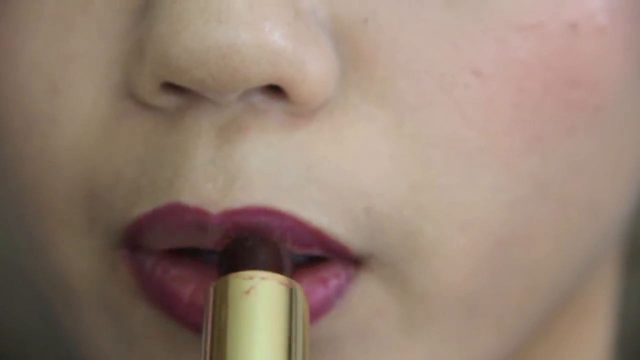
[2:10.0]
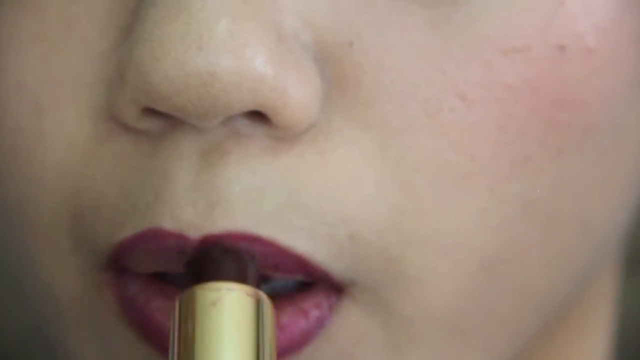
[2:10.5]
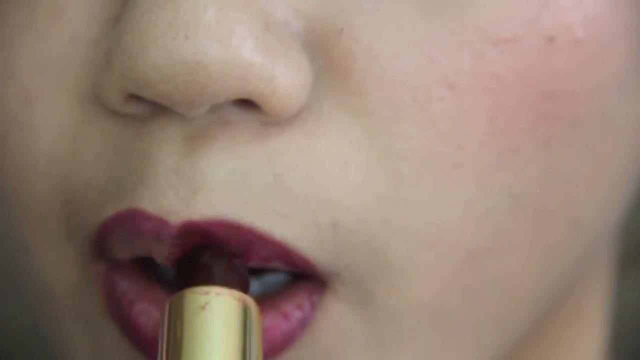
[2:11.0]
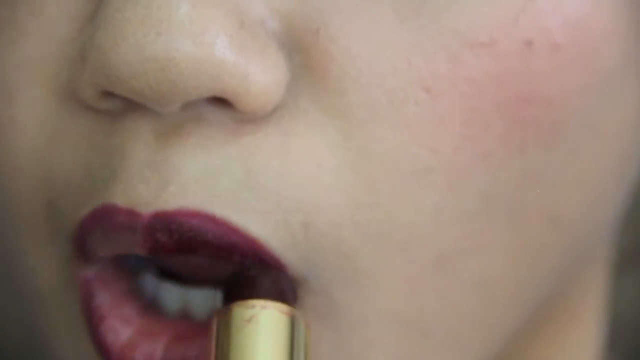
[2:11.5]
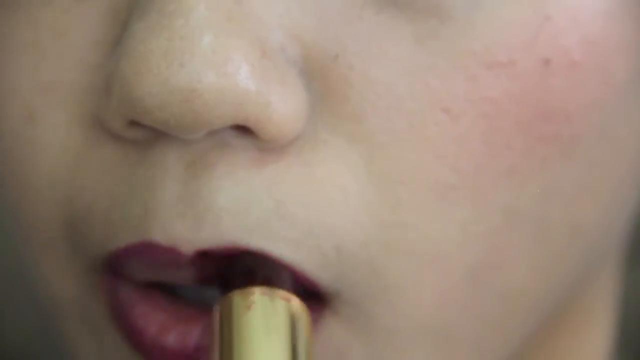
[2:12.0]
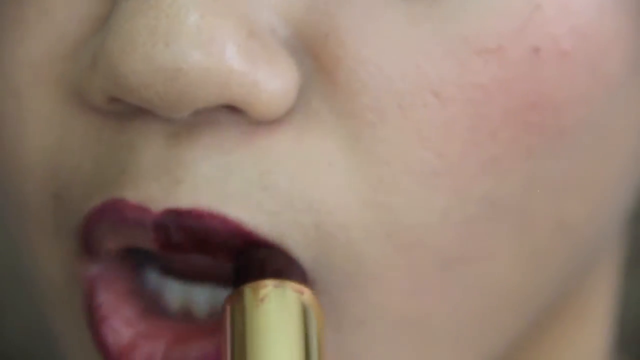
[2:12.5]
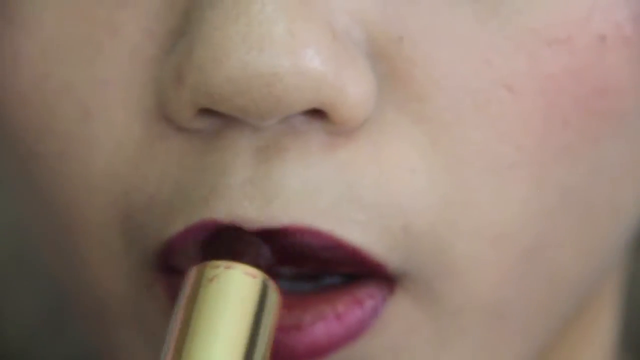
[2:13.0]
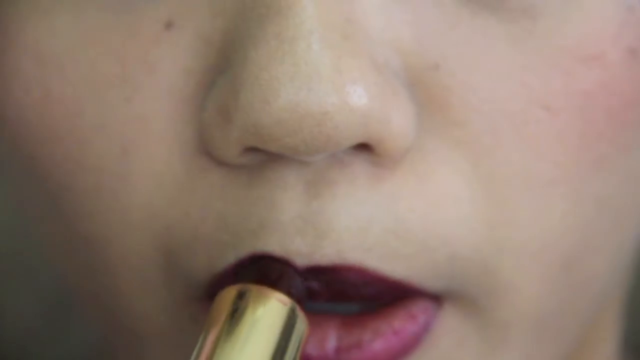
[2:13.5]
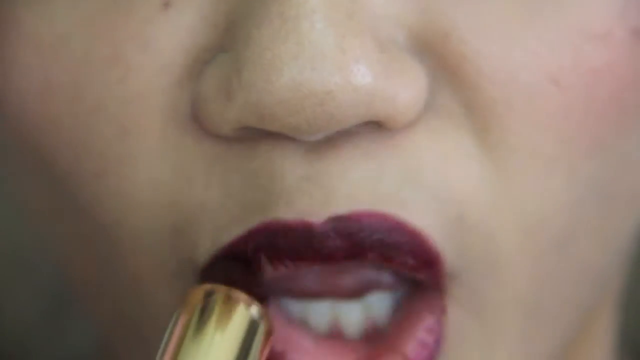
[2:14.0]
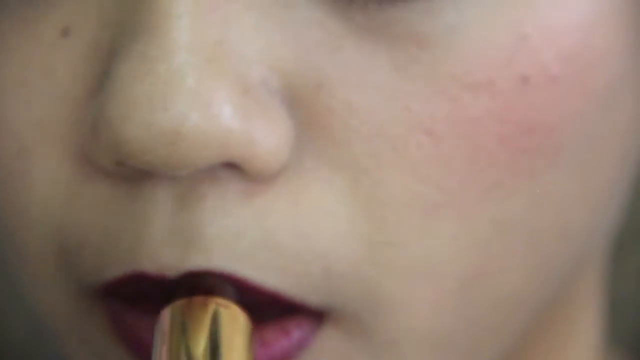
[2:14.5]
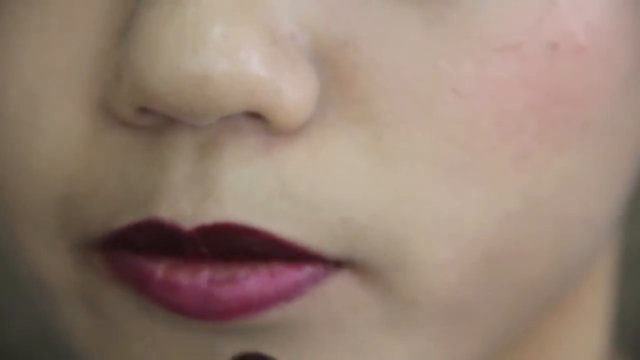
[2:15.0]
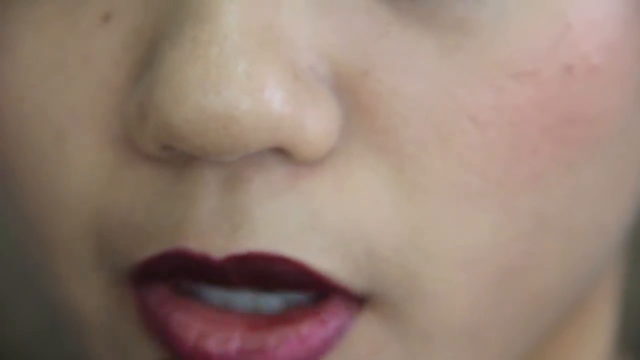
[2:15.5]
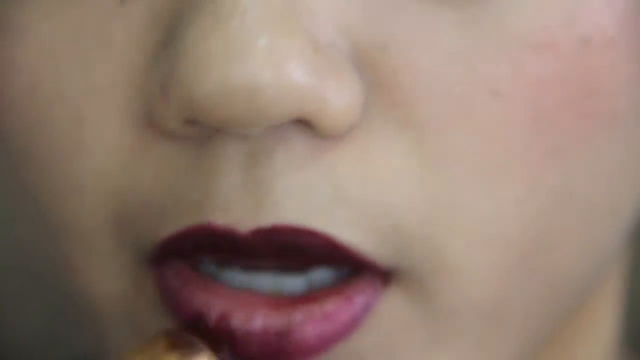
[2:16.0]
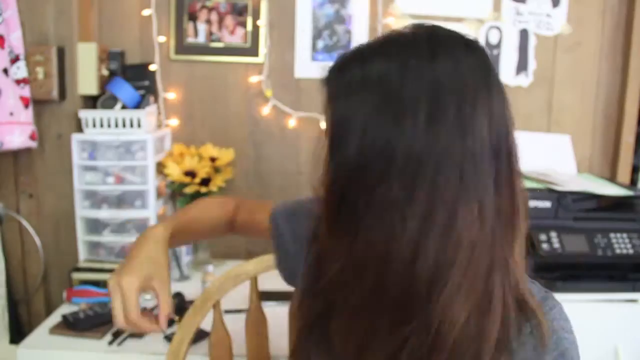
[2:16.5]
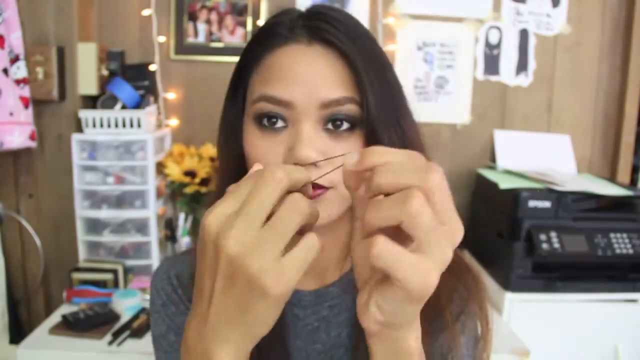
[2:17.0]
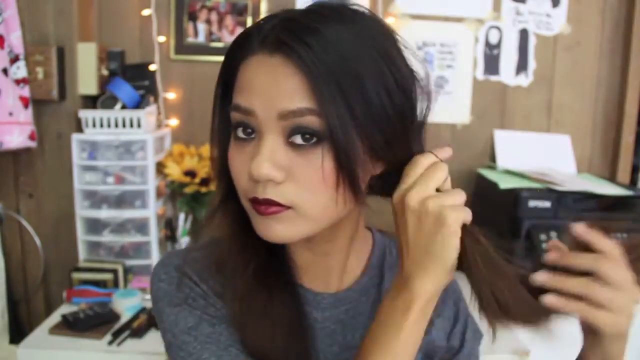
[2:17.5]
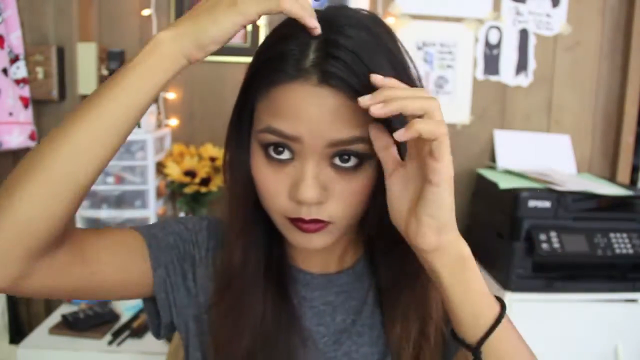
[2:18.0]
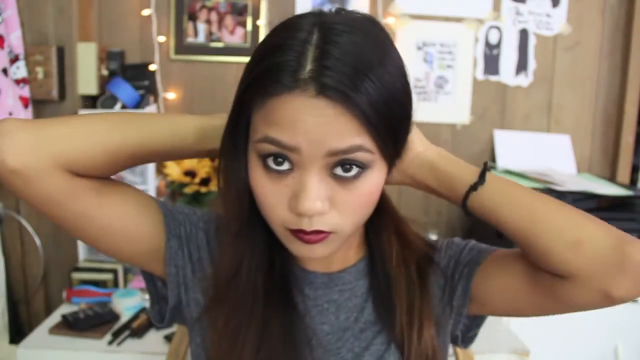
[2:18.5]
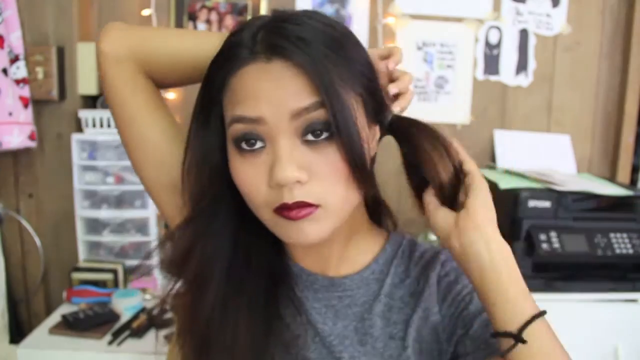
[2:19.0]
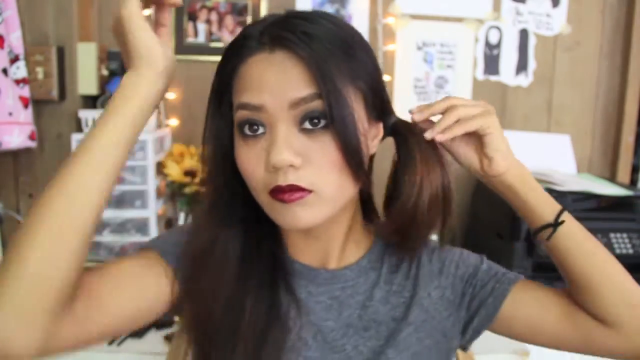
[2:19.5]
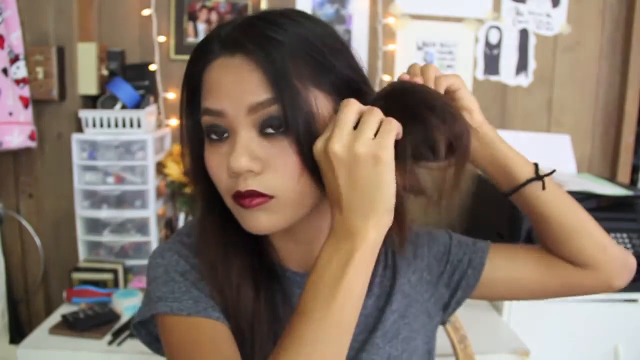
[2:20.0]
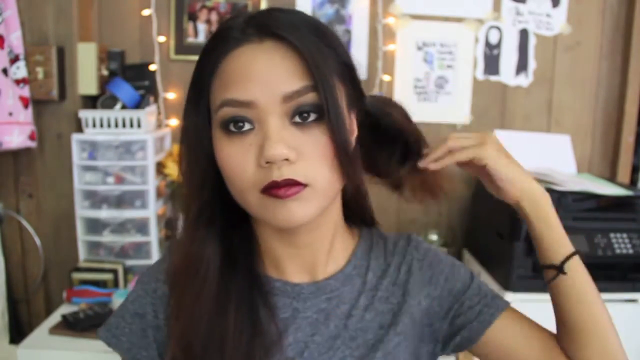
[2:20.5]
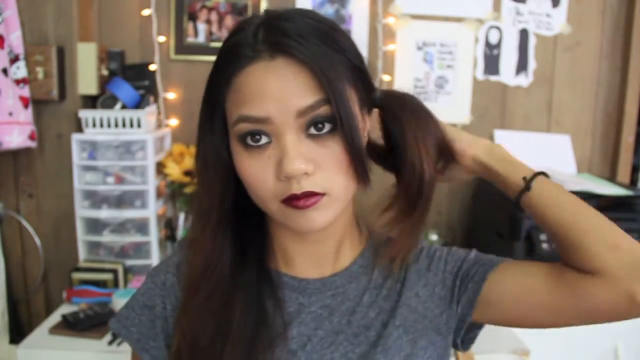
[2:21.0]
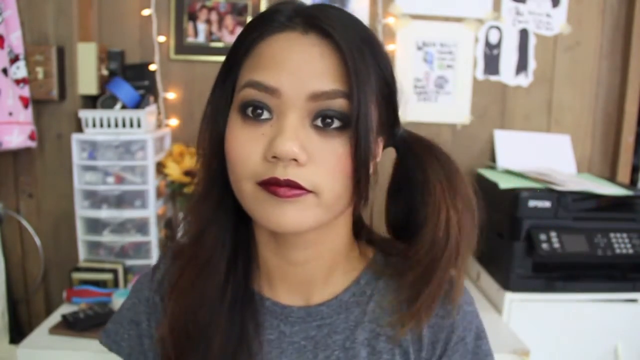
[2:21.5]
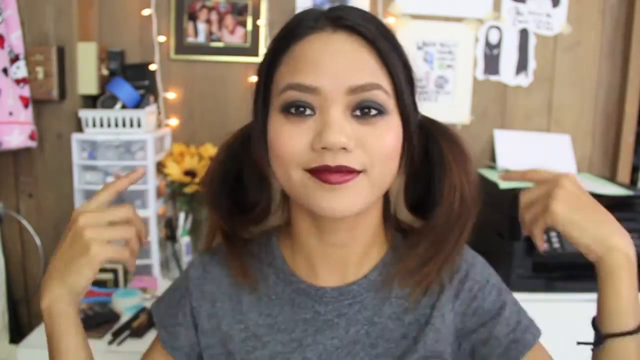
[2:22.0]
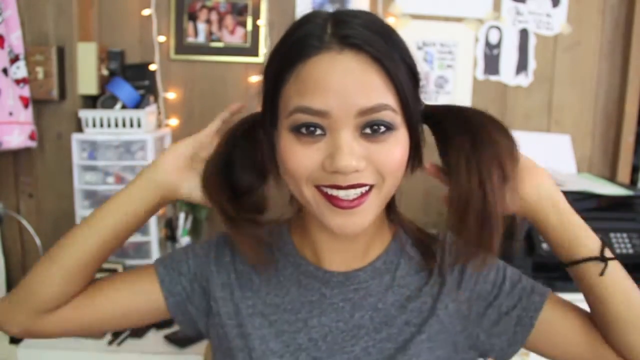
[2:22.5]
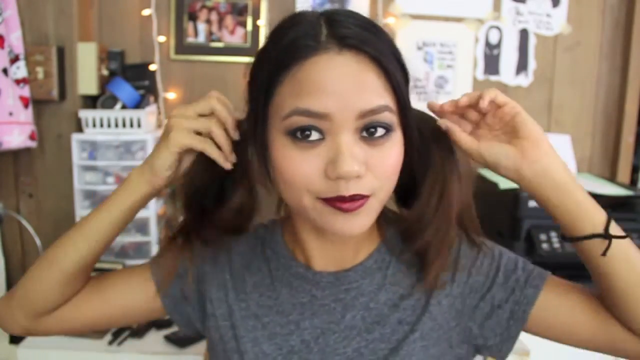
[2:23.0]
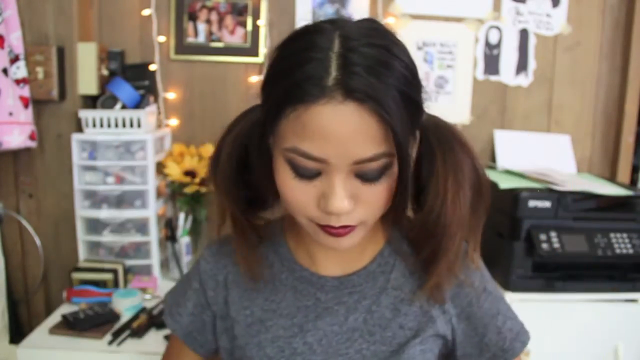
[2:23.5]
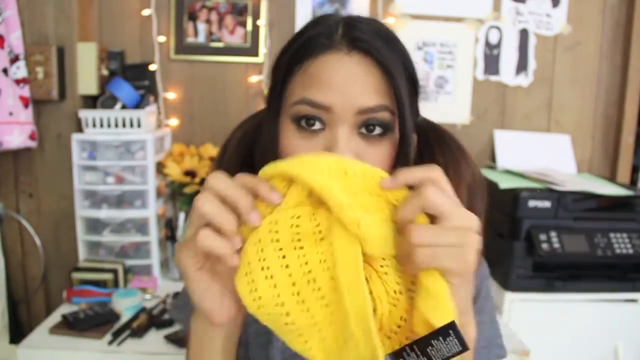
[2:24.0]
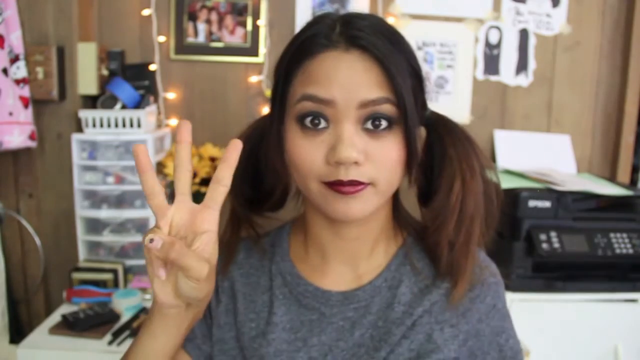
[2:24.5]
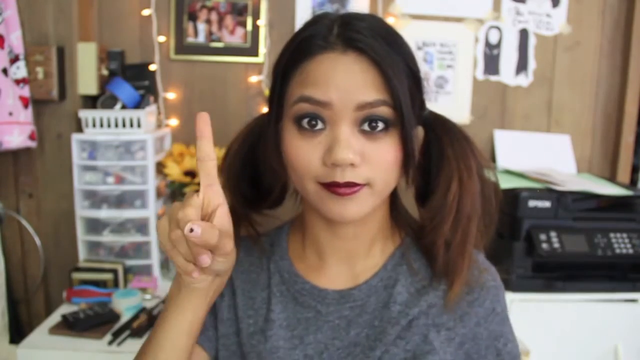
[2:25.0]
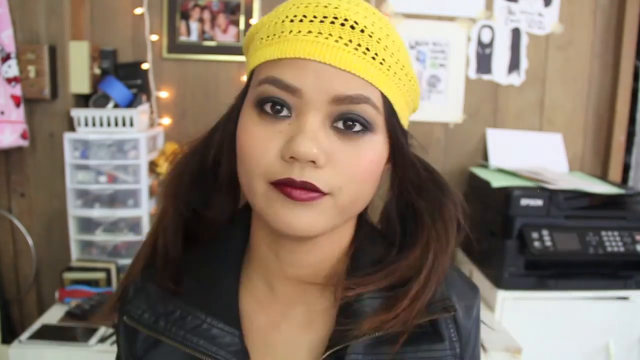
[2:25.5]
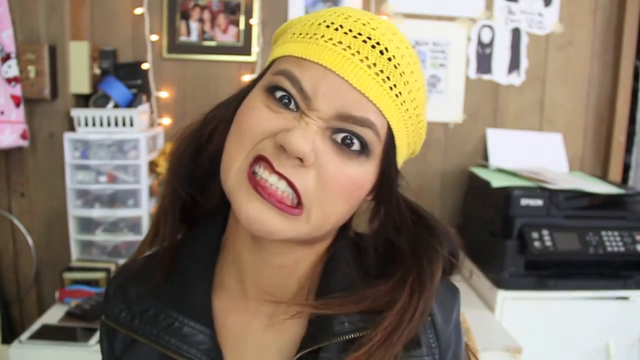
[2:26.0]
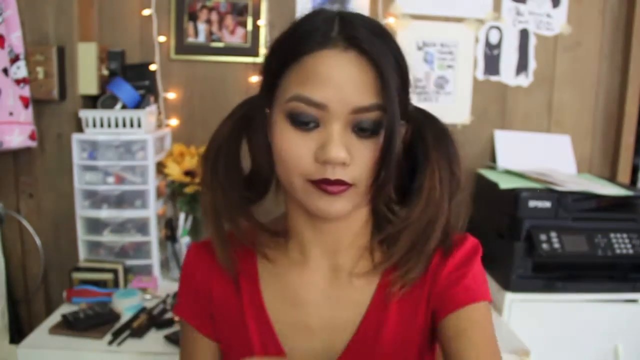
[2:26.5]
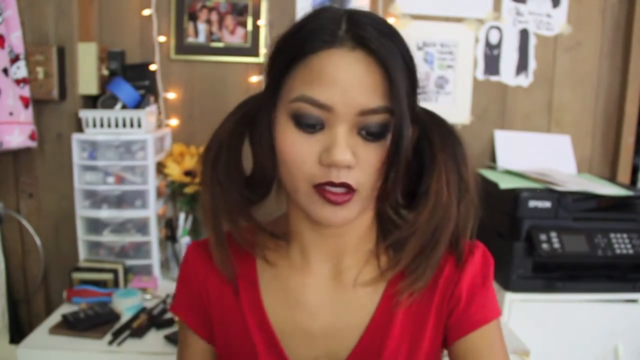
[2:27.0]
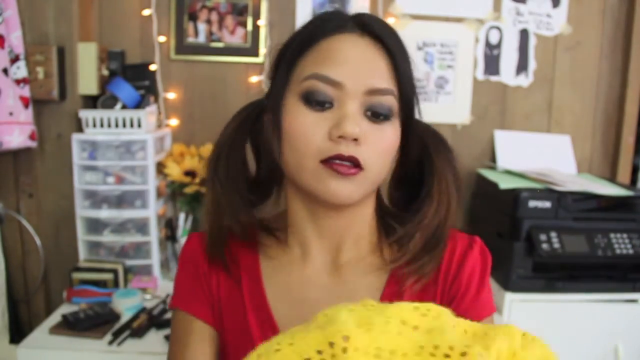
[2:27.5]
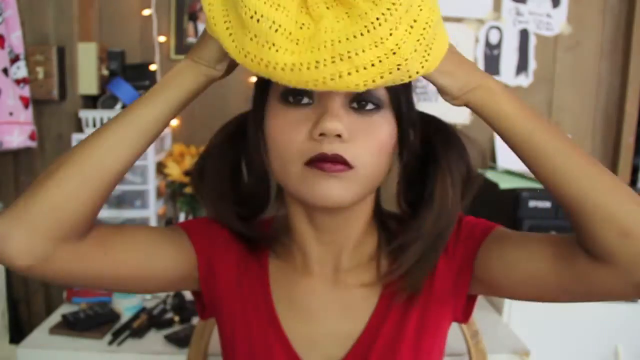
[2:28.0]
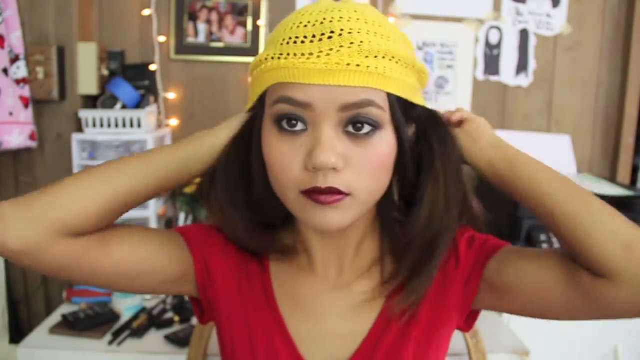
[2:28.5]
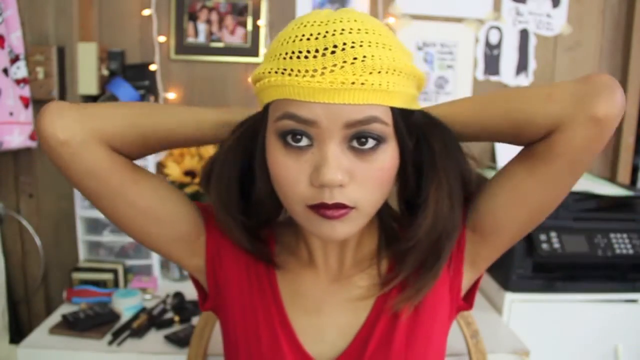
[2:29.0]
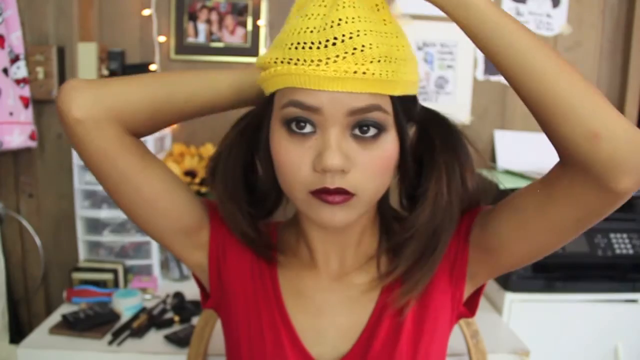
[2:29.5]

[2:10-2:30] The product she uses on her lips matches the lipstick. She works on her hair, making two simple ponytails, and puts her yellow hat on. The makeup is simple.